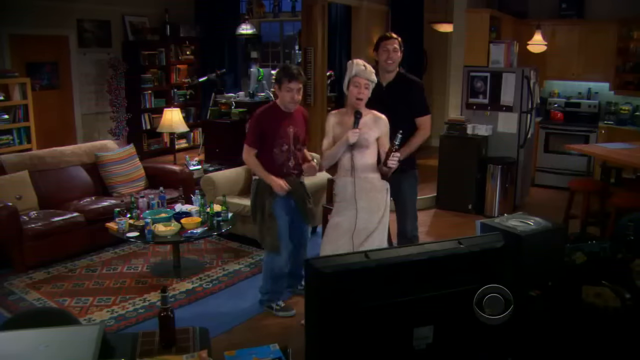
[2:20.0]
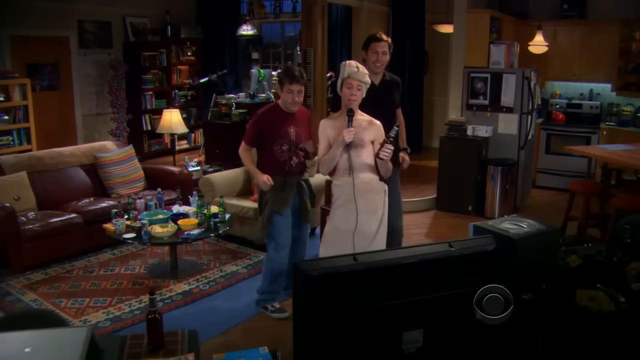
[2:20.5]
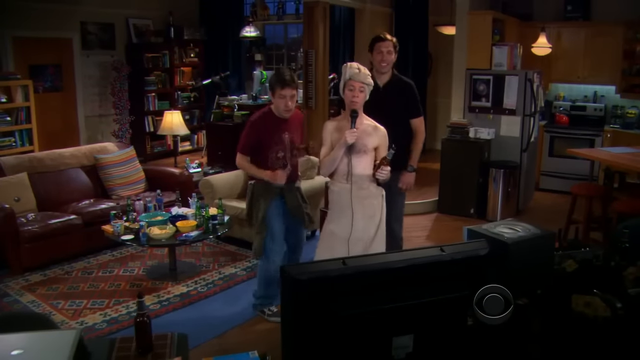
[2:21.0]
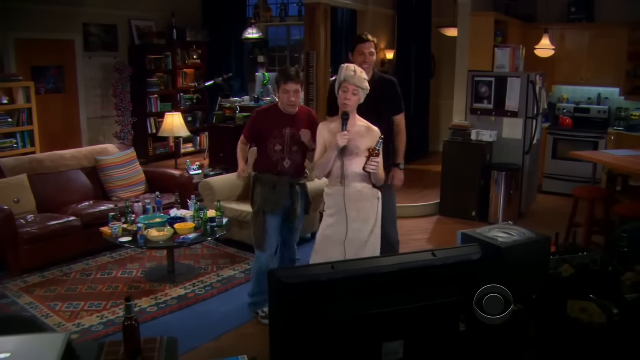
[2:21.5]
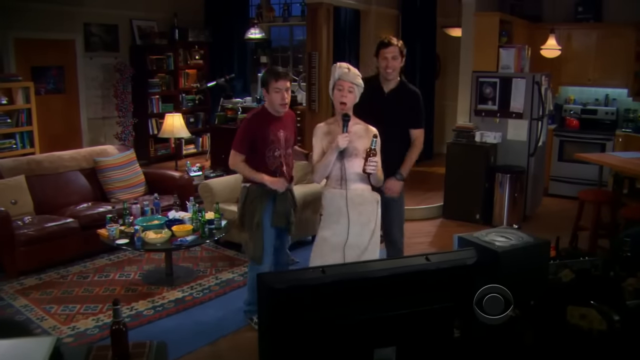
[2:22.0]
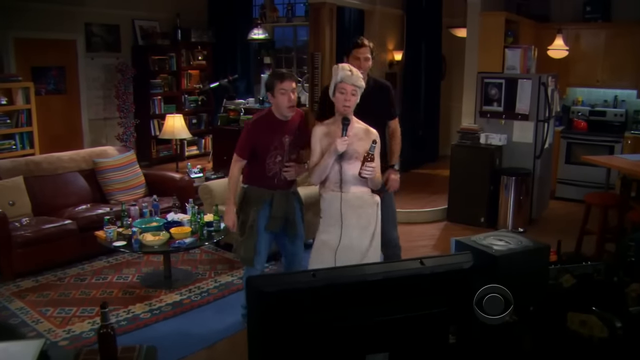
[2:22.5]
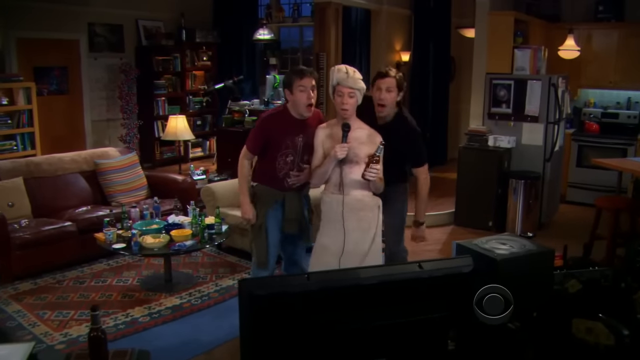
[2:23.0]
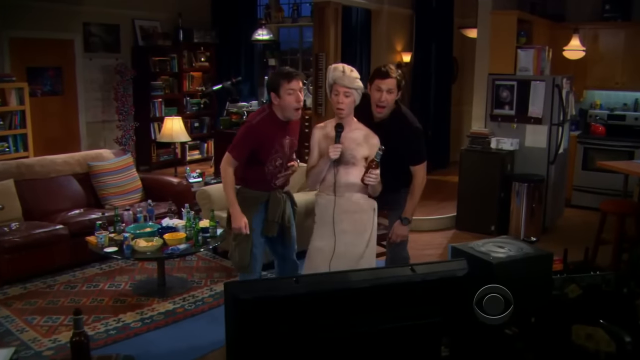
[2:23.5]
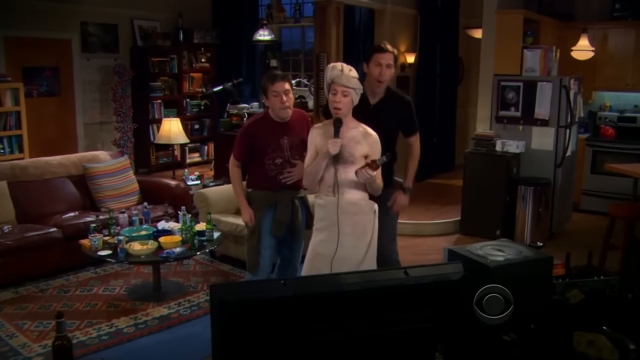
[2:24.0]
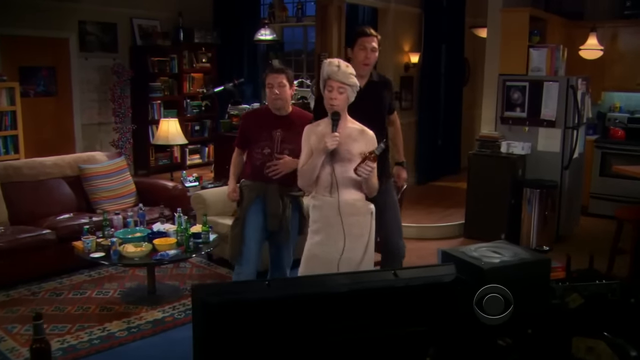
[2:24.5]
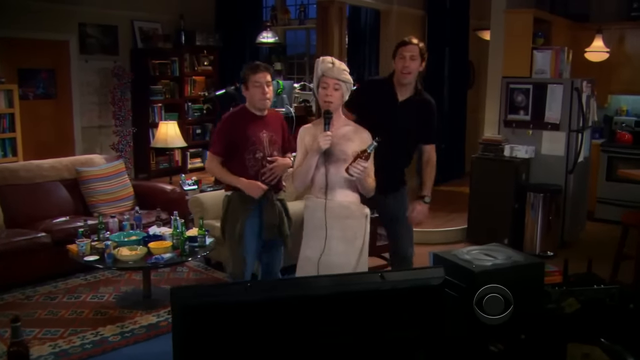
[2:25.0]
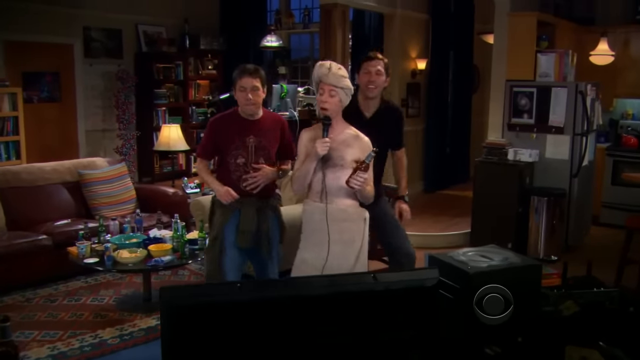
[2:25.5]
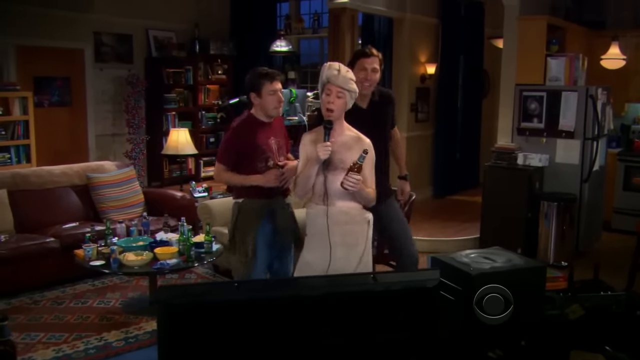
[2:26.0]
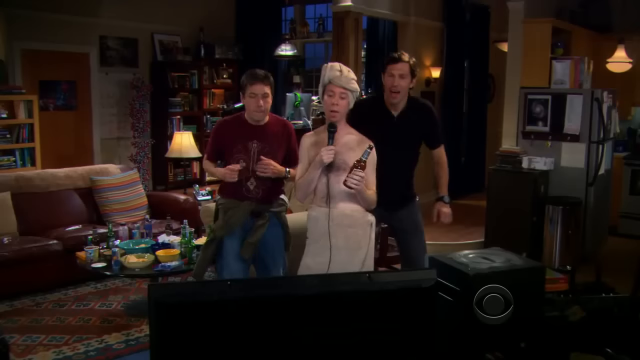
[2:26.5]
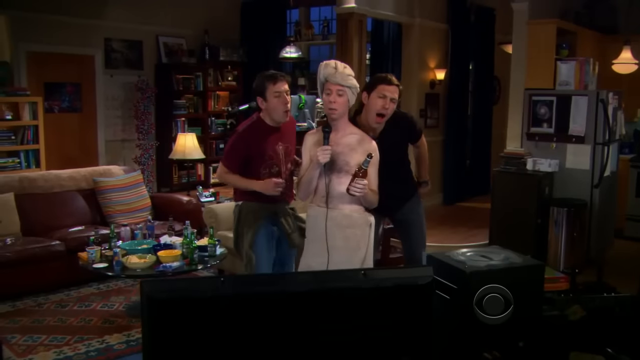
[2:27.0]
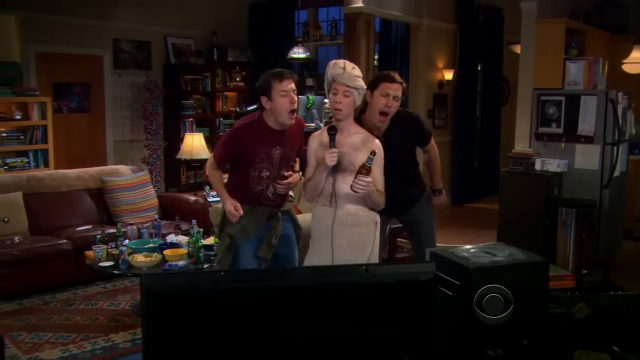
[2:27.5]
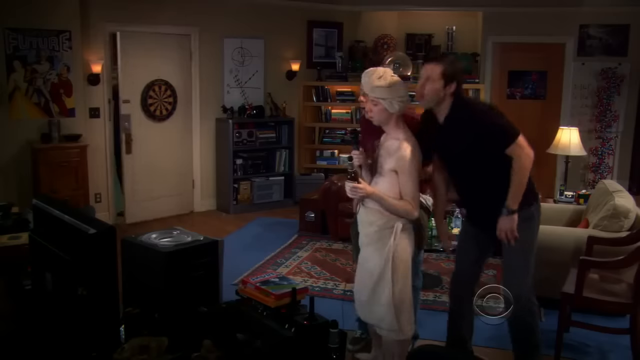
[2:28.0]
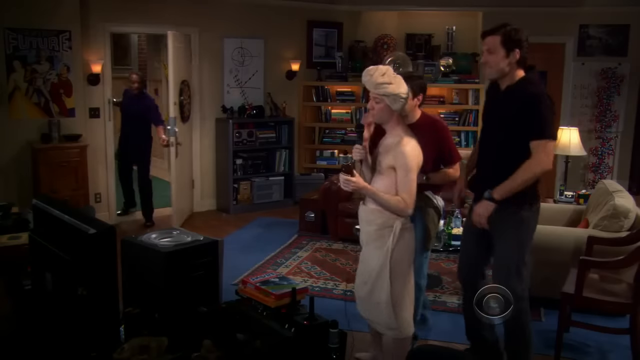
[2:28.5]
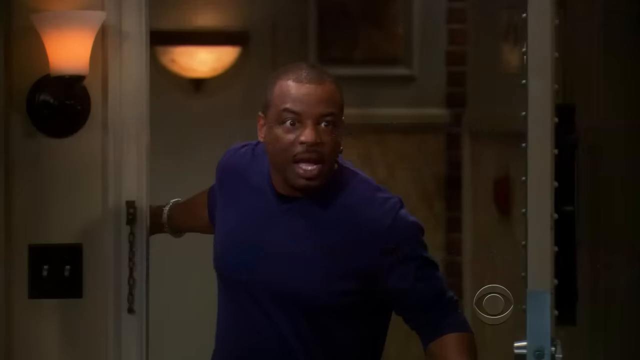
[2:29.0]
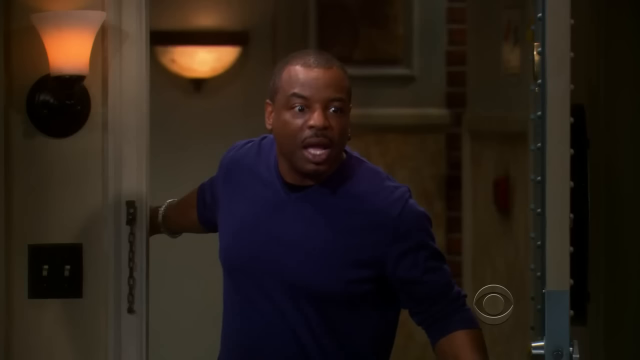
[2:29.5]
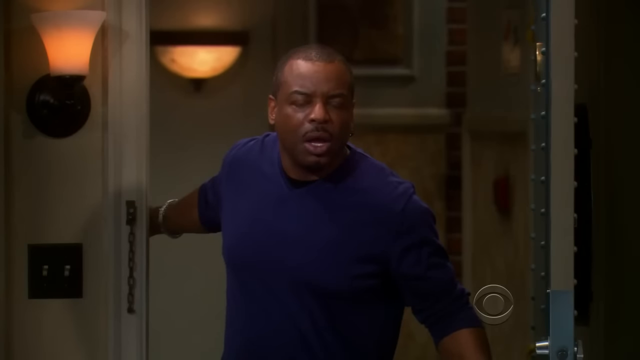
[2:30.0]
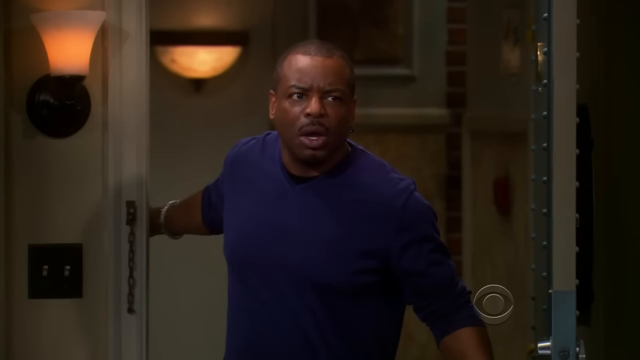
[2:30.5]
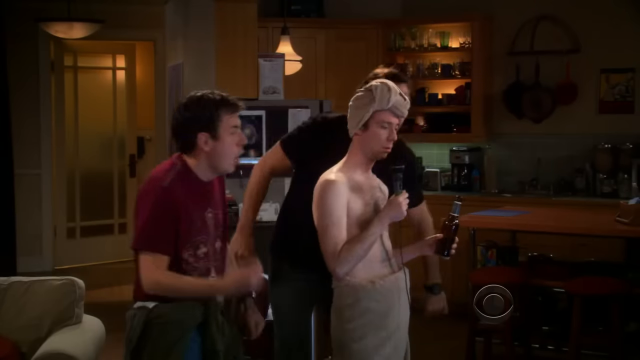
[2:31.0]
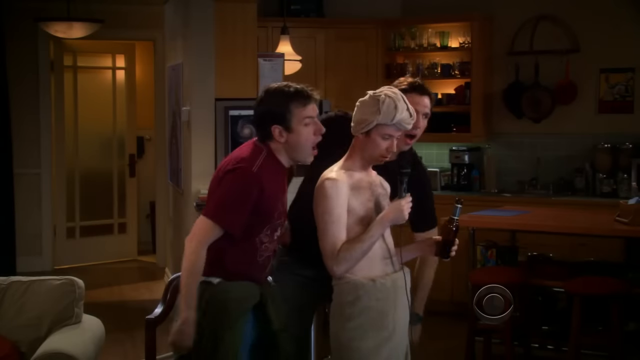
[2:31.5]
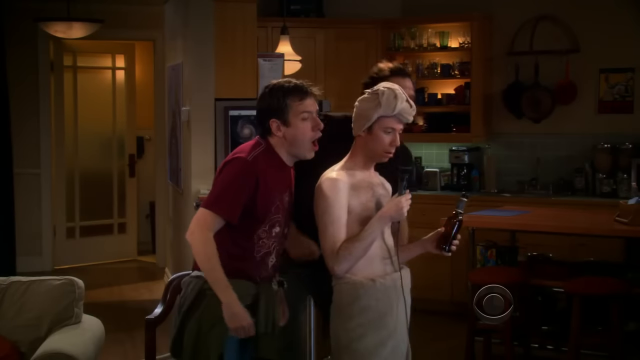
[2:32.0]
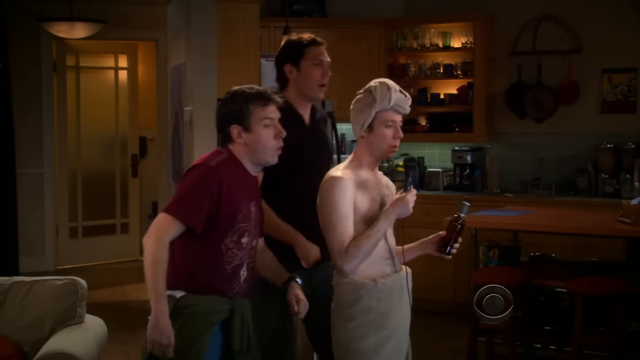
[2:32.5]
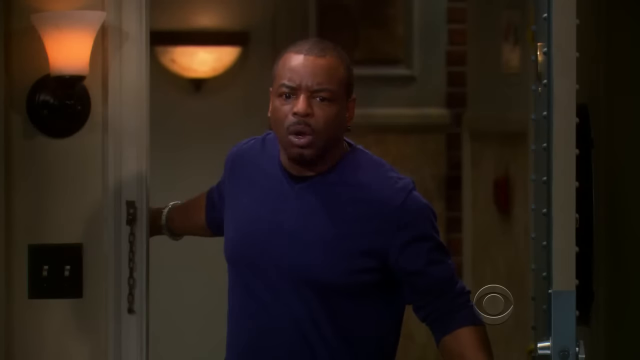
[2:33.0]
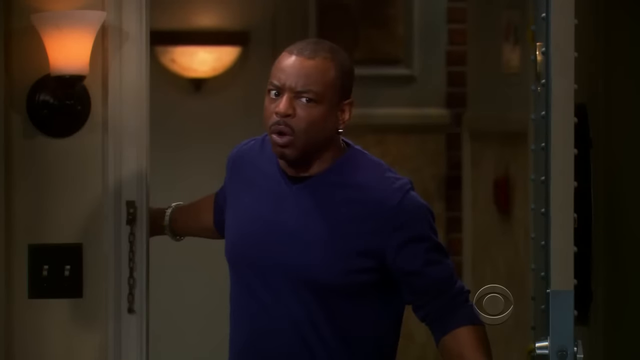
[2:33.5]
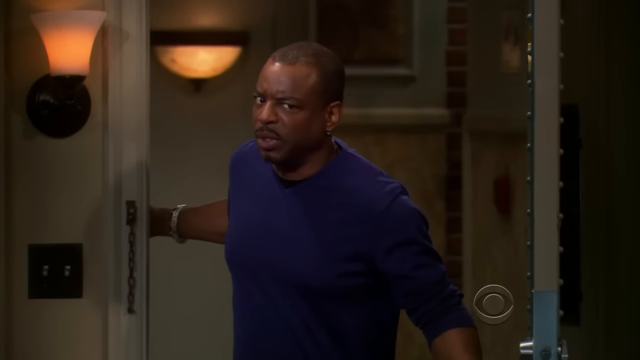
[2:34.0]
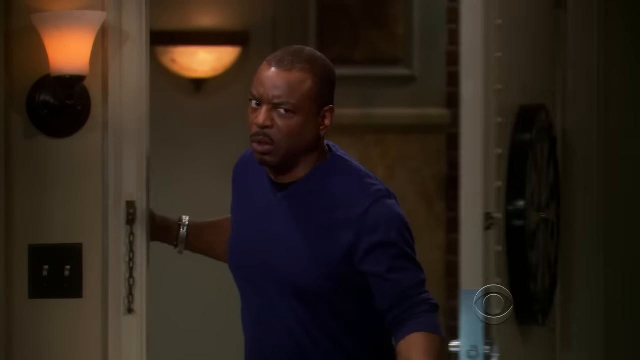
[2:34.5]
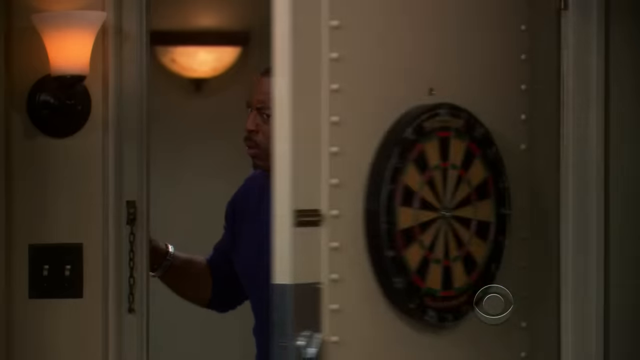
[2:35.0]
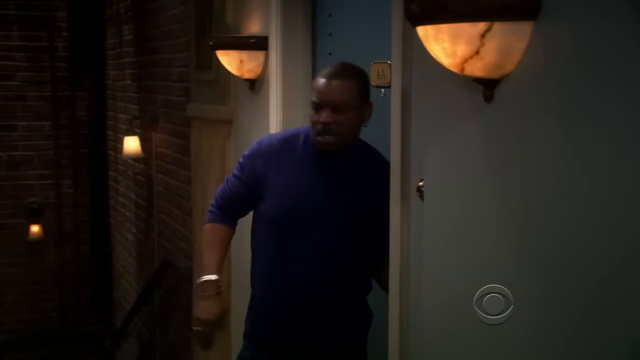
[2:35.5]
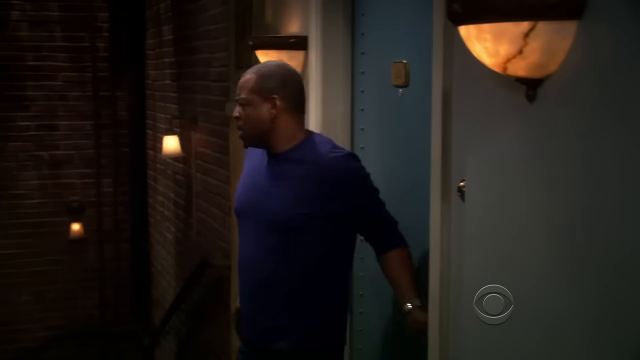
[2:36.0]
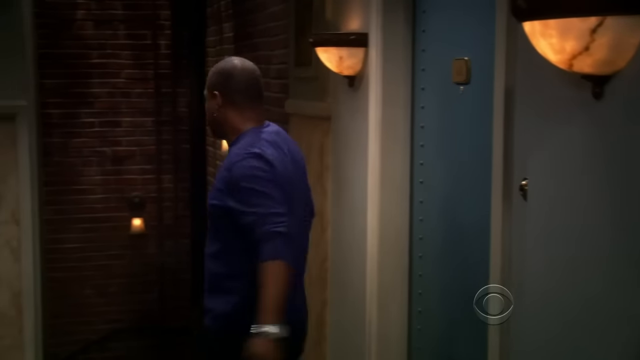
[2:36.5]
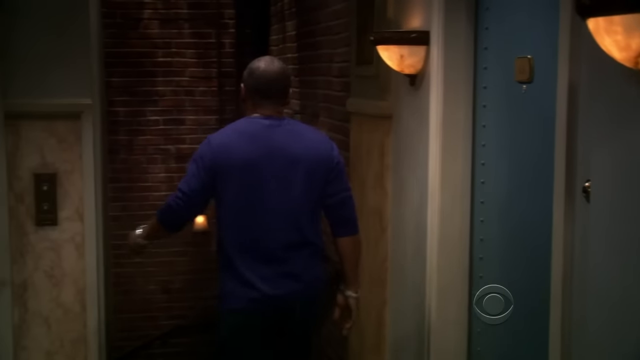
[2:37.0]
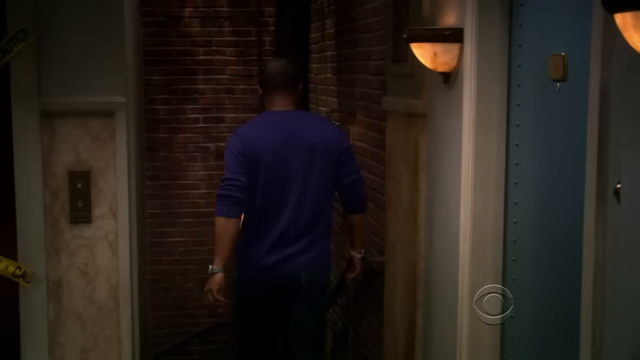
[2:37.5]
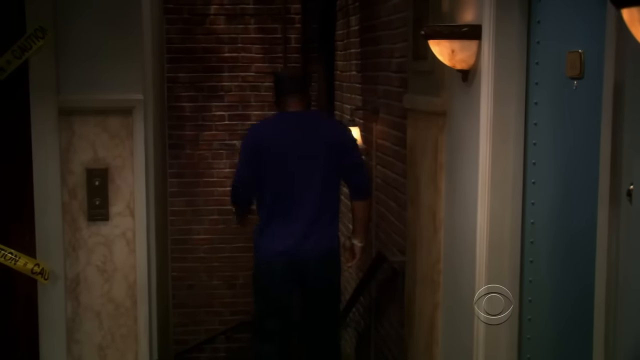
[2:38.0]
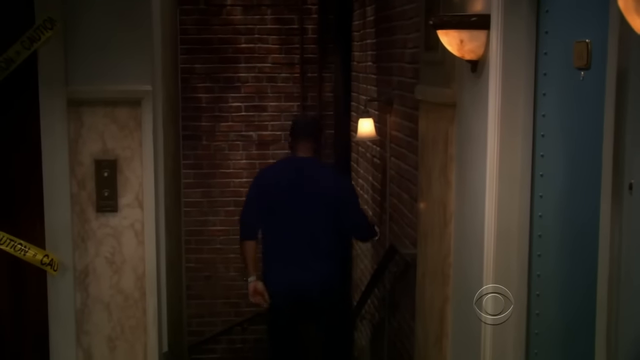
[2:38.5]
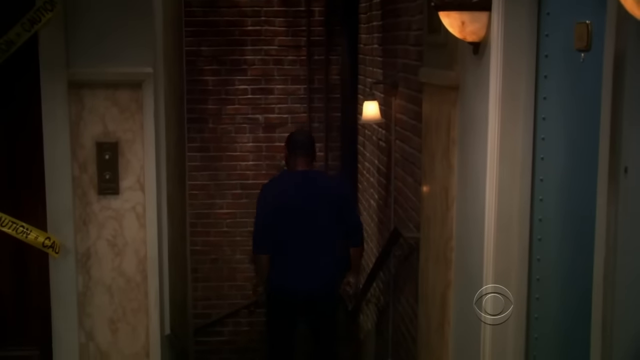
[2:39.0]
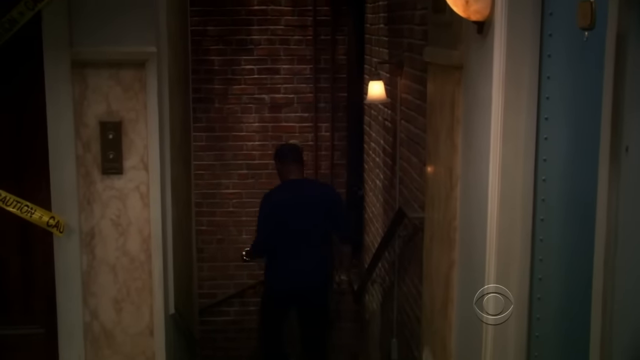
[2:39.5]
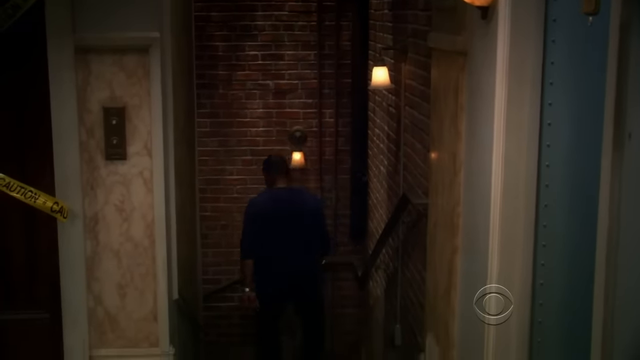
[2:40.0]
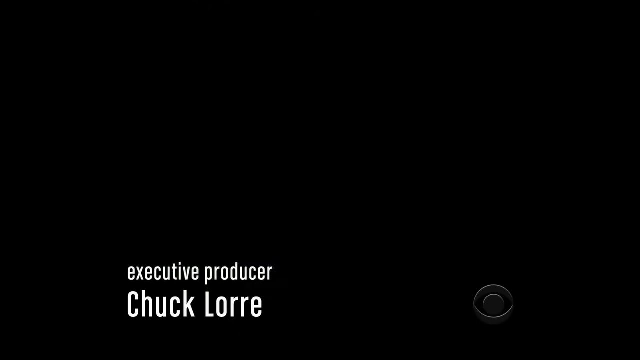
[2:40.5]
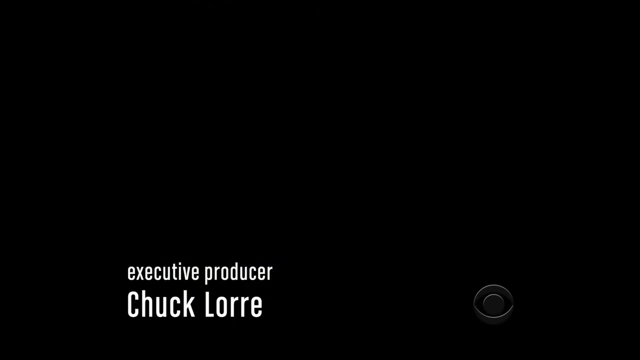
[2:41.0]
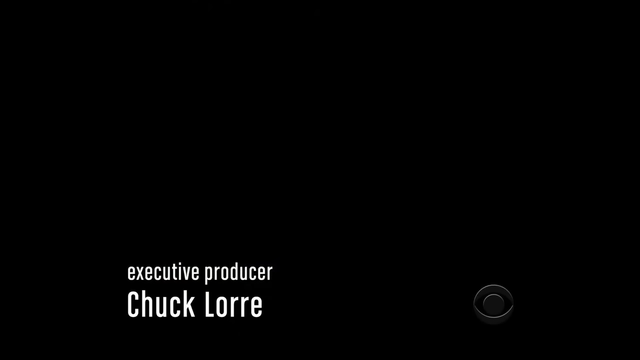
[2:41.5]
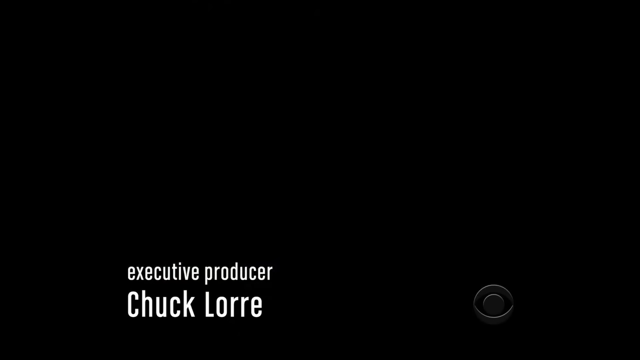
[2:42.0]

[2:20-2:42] Back in Sheldon's apartment, the three guys are singing into the microphone. The guy from the bookstore now has the towel on his head and no shirt, and holds a beer, with two backup singers. A black man in a blue shirt, wearing a watch, opens the door, which has a dartboard on it, comes in, yells something, looks appalled, and walks back out. The towel stays on. He goes downstairs by the steps, since the elevator has a caution warning on it and is still broken.